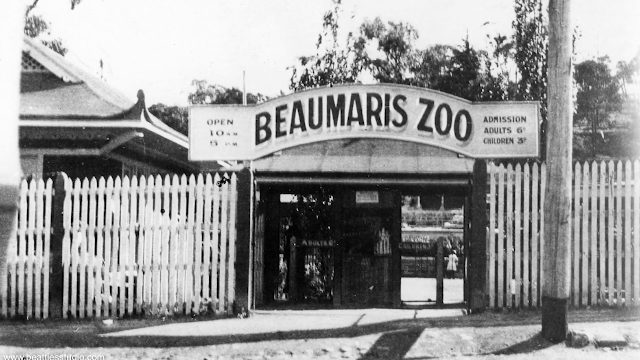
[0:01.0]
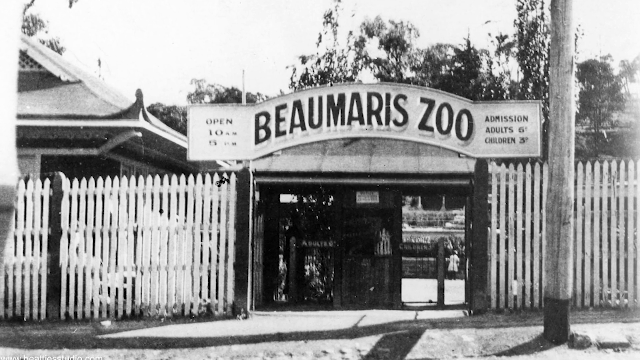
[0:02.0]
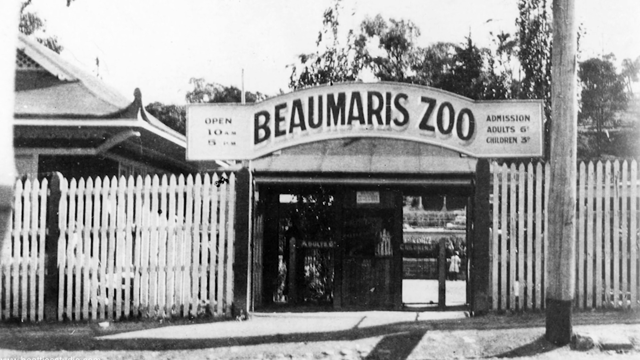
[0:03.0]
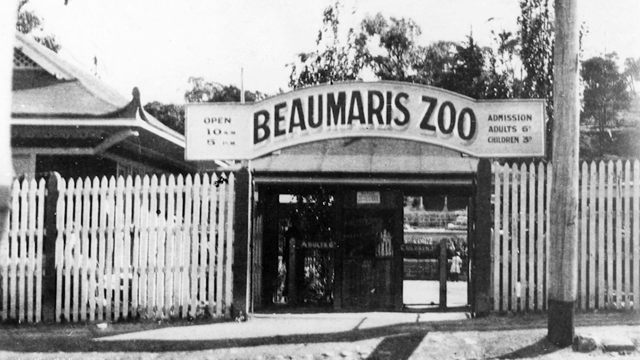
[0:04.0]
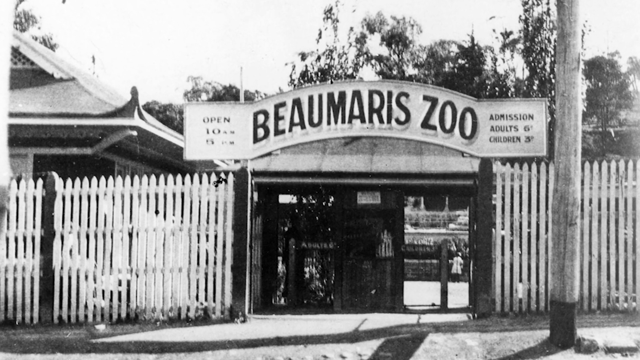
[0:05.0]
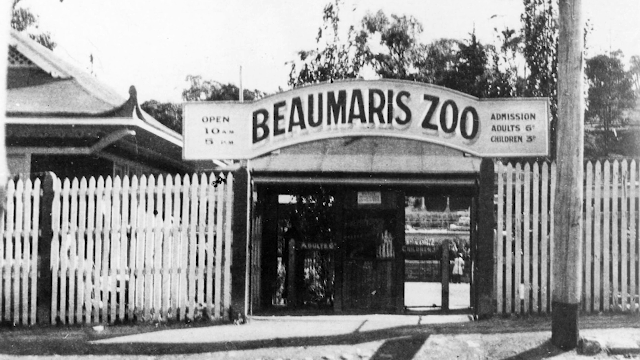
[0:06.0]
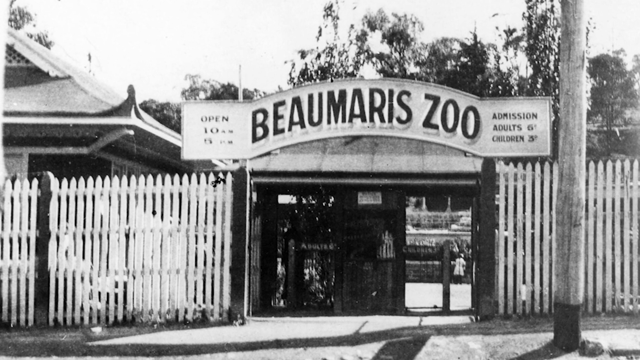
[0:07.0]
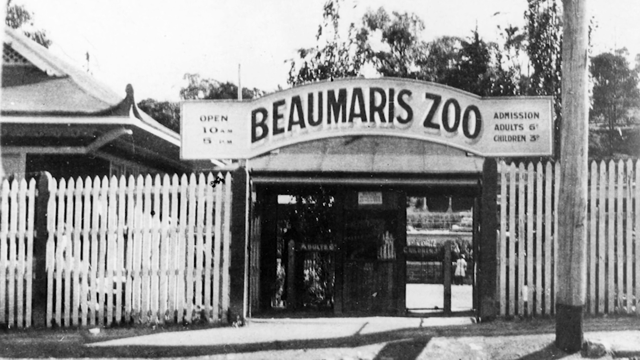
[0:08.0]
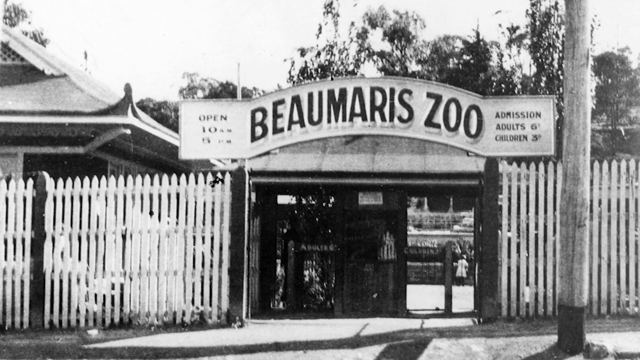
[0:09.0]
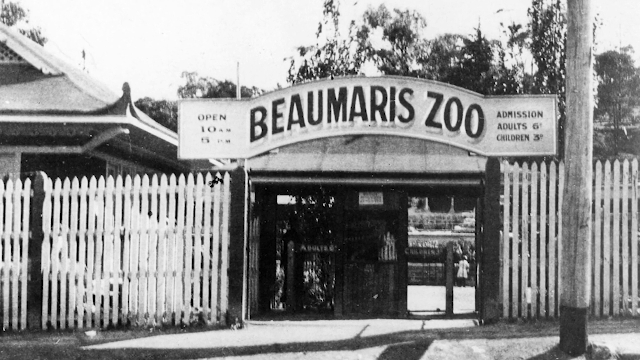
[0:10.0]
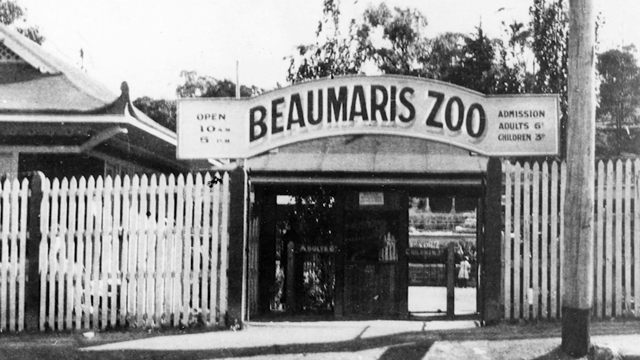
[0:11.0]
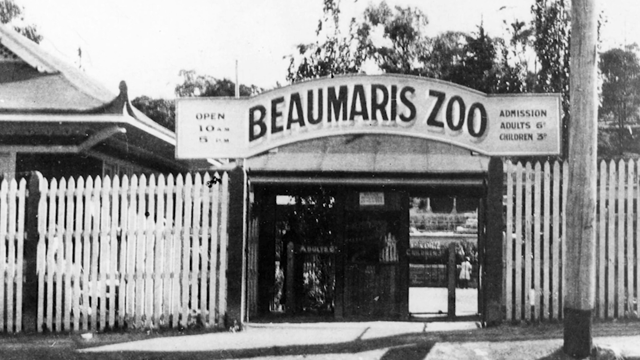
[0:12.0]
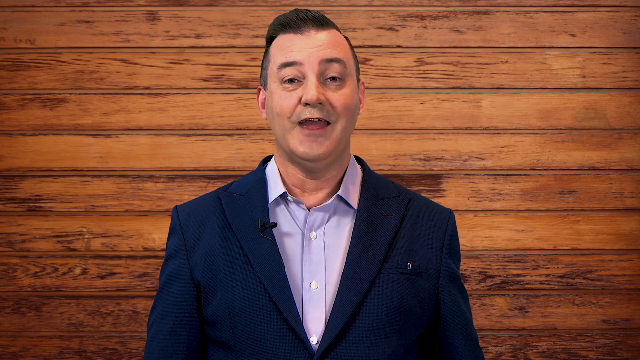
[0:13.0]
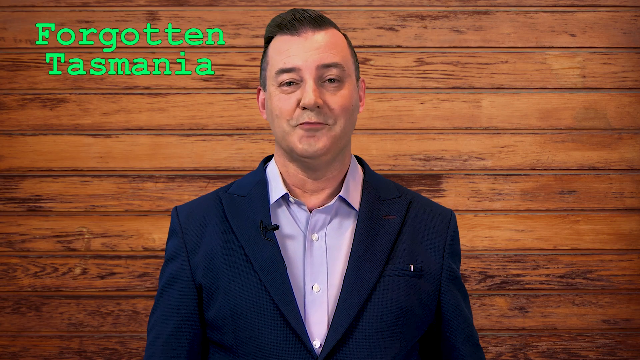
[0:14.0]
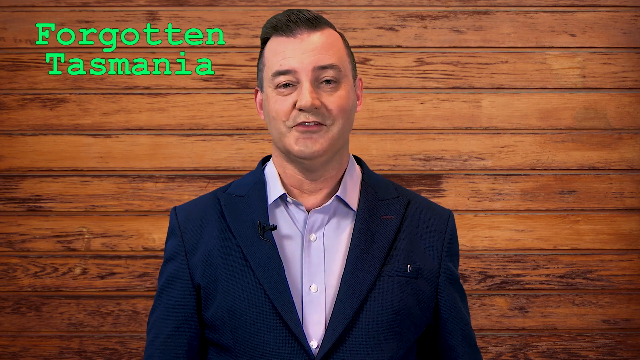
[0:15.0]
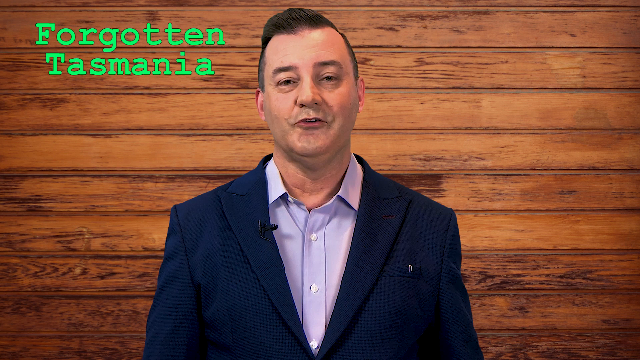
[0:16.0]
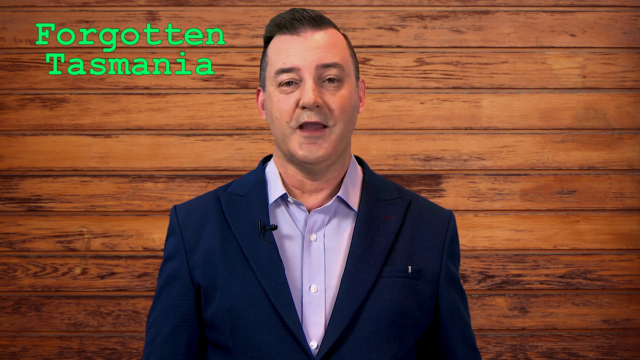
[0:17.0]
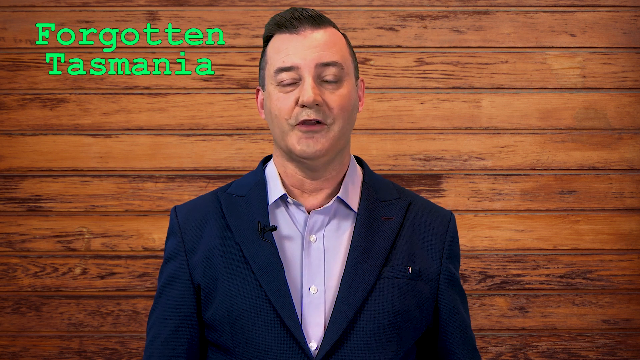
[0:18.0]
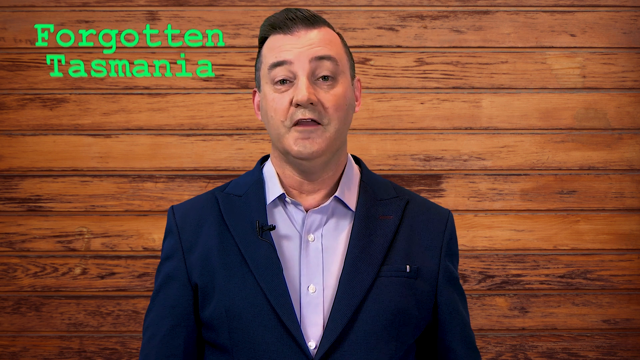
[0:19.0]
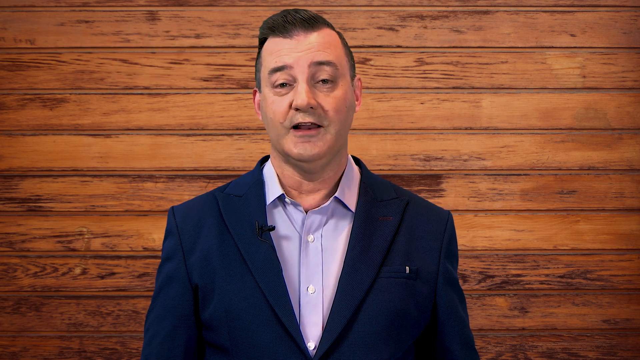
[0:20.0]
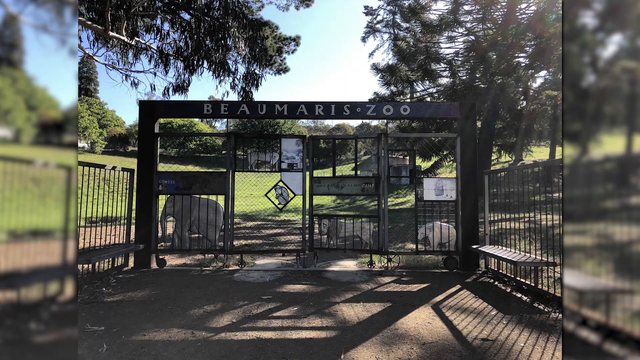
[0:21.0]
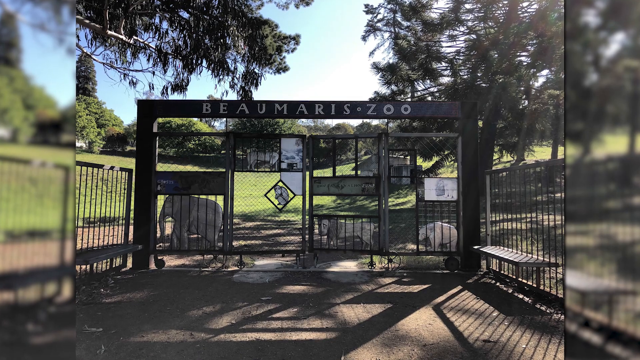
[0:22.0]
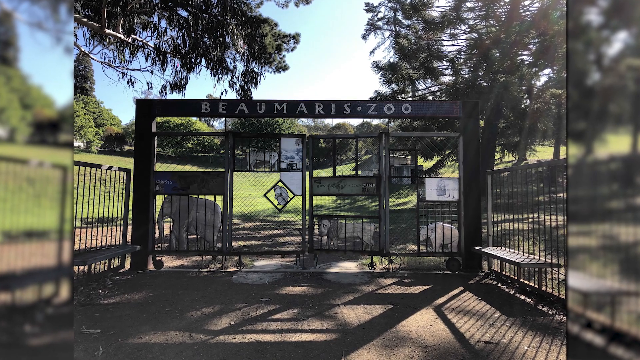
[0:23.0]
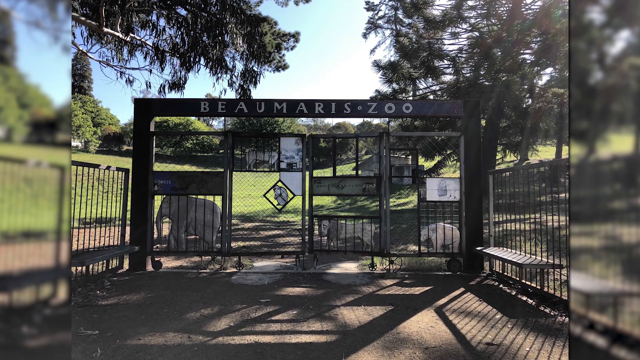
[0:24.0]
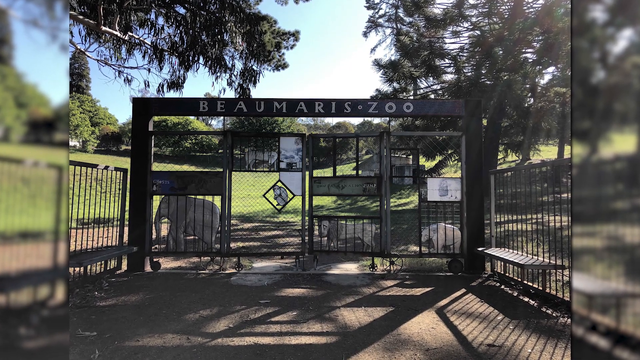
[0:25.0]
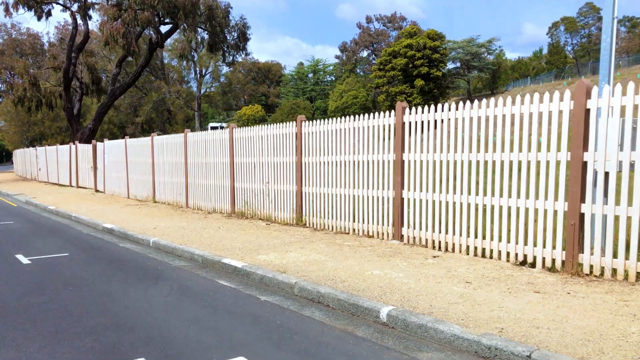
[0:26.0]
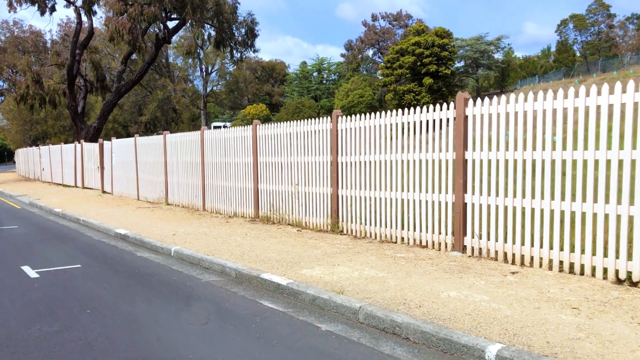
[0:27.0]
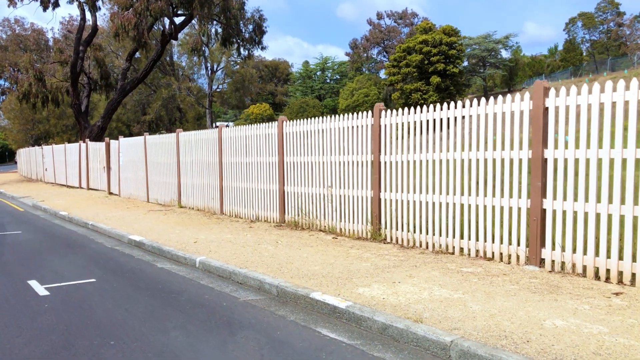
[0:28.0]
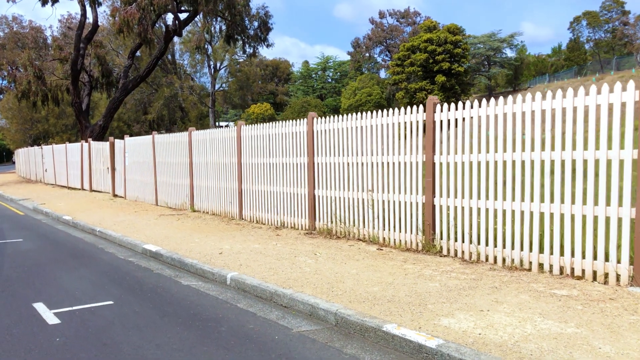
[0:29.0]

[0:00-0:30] A very old black and white photo shows what looks like the front entrance of a zoo, with the title "Beaumaris Zoo" at the top. A tall white picket fence runs on the left and right sides of the entrance, and very tall trees stick out above in the background. On the right side, in front of the entrance, there is a post, like a wooden post. The view slowly zooms in. Next, a man wearing a suit faces the camera, looking toward the viewer and talking, with a wooden wall behind him. In the top left are the words "Forgotten Tasmania" in a green font. The man keeps talking as he looks toward the viewer. The scene then switches to what looks like a modern-day view of the zoo: a white picket fence, a road on the left side, and a lot of trees in the distance beyond the fence.